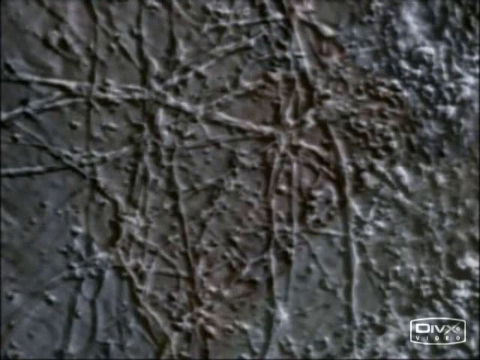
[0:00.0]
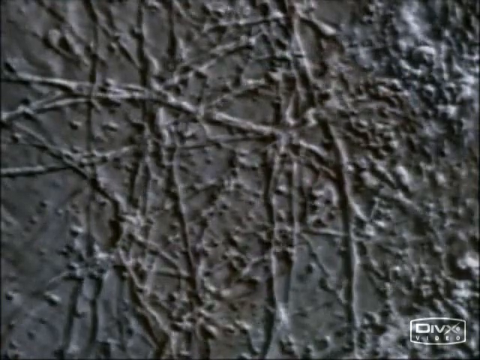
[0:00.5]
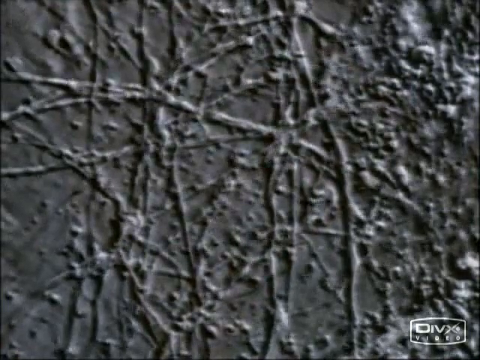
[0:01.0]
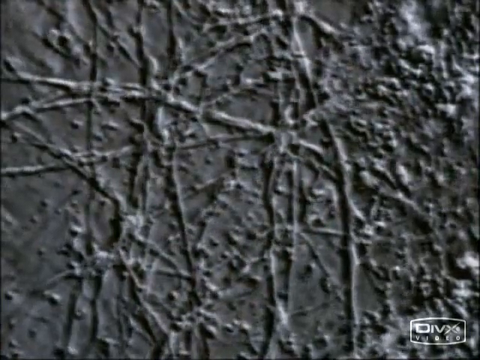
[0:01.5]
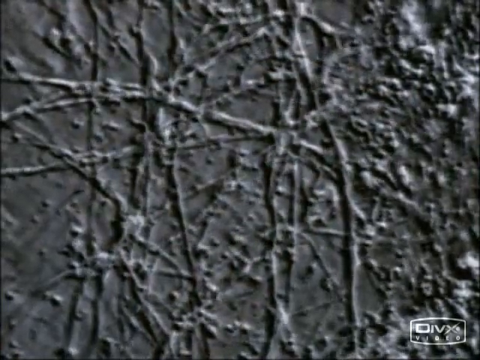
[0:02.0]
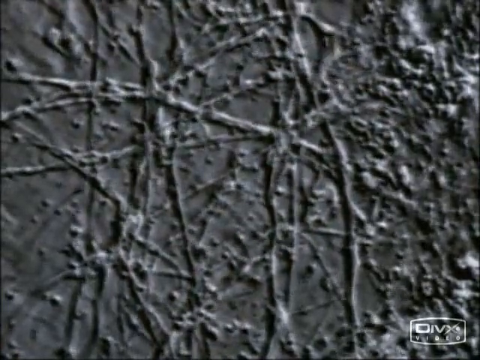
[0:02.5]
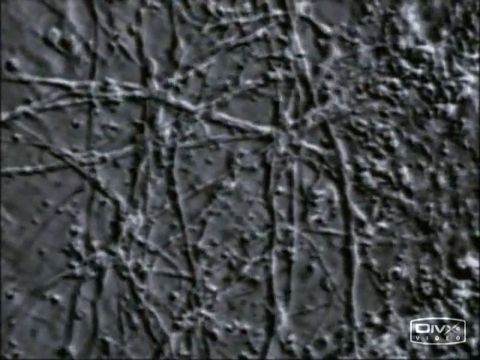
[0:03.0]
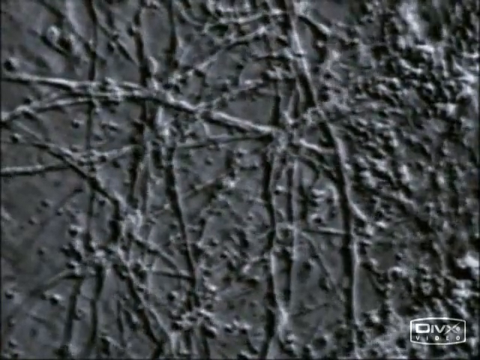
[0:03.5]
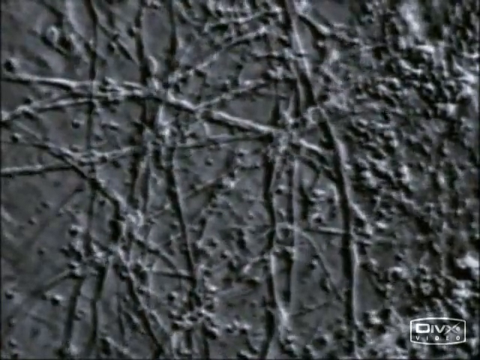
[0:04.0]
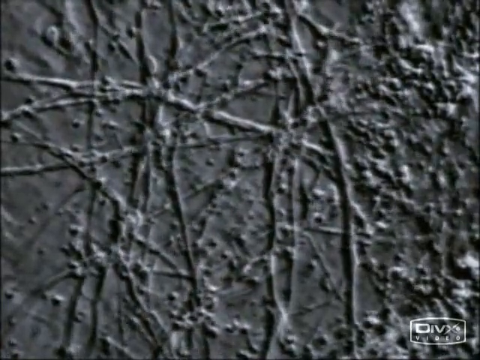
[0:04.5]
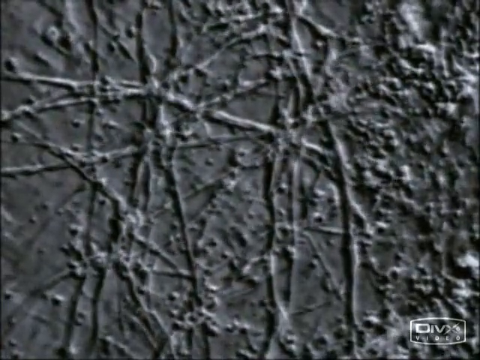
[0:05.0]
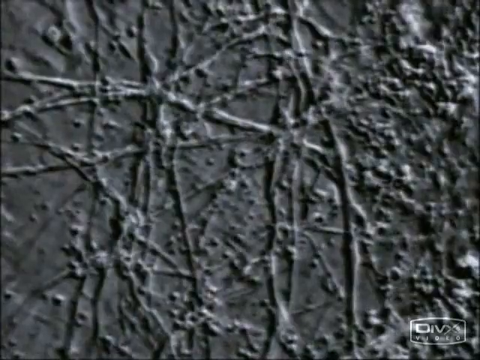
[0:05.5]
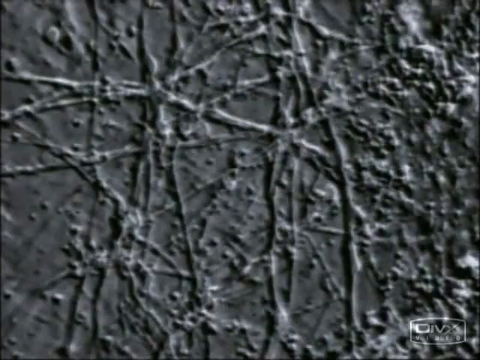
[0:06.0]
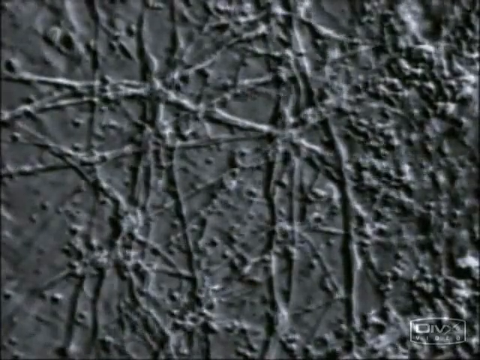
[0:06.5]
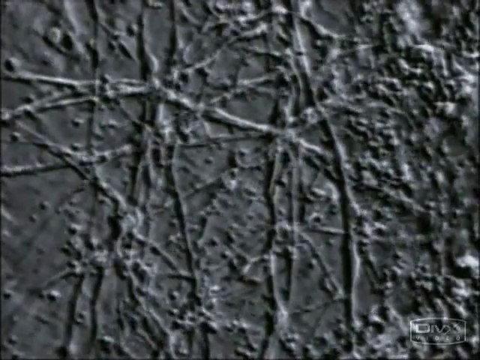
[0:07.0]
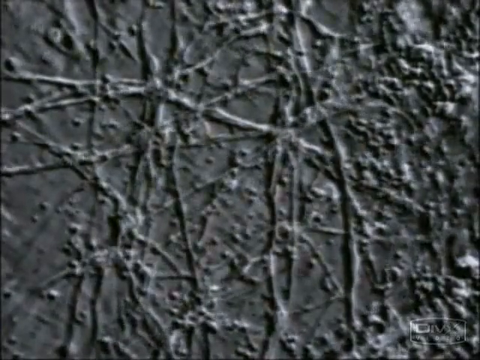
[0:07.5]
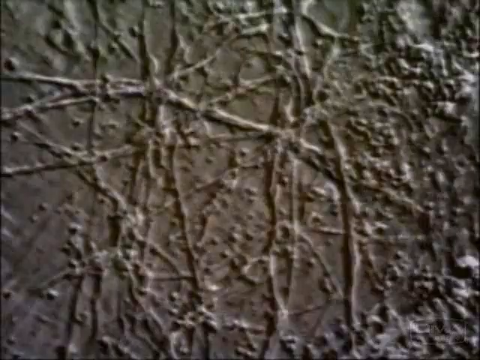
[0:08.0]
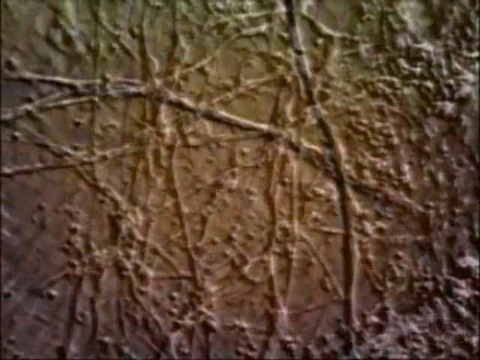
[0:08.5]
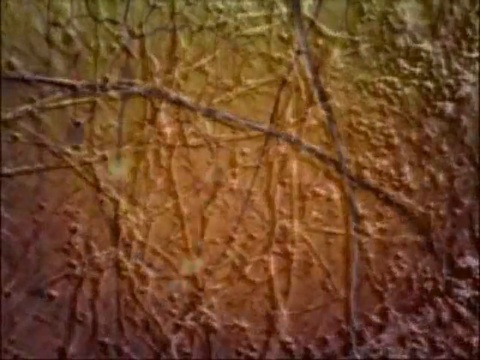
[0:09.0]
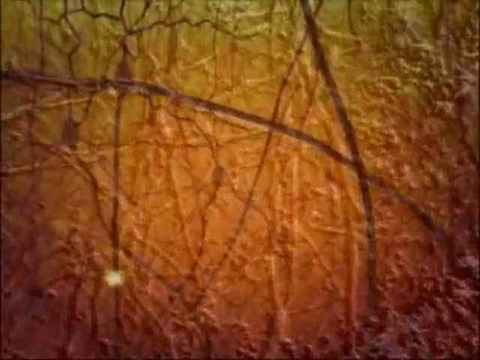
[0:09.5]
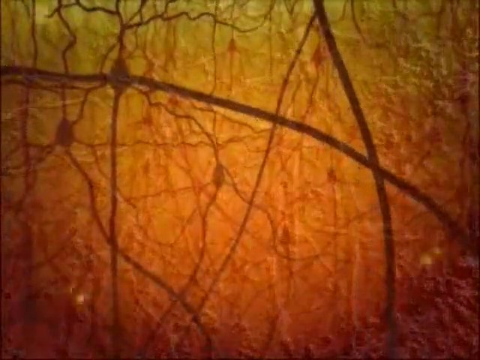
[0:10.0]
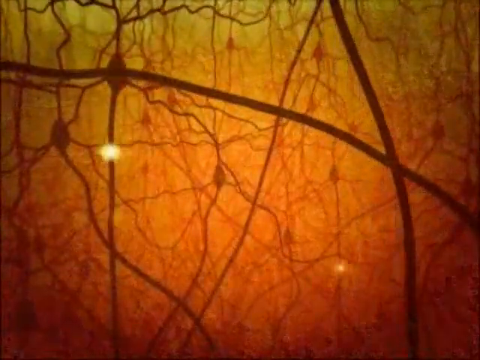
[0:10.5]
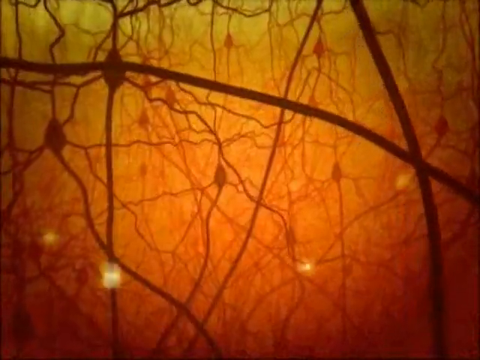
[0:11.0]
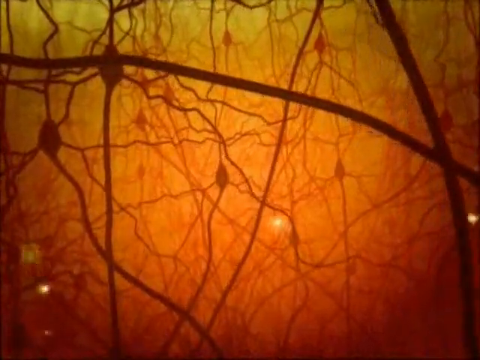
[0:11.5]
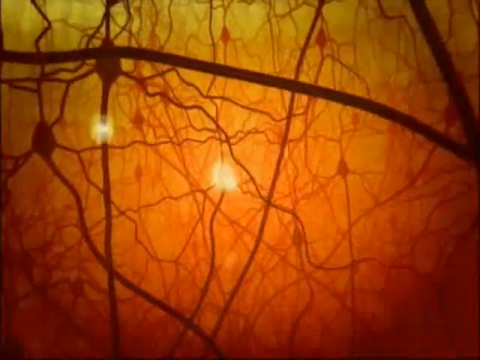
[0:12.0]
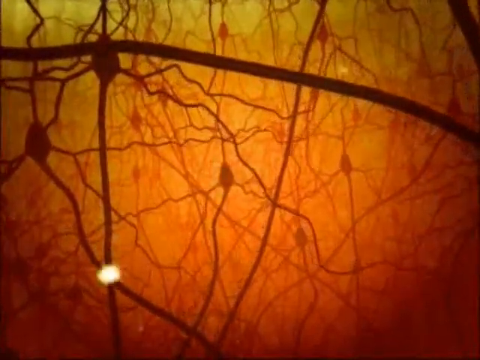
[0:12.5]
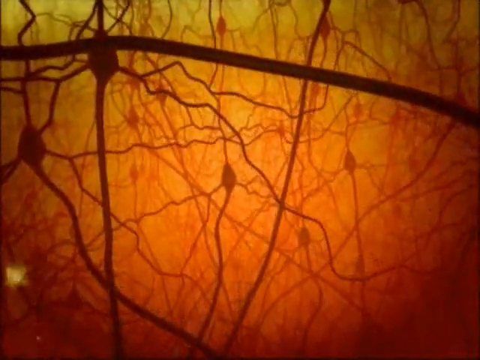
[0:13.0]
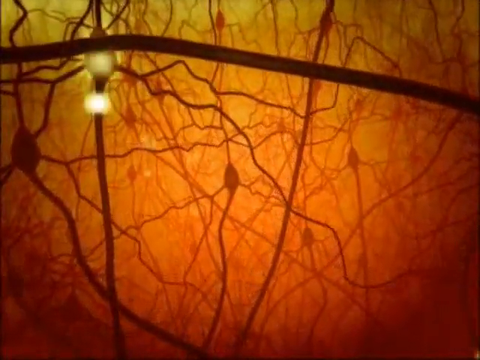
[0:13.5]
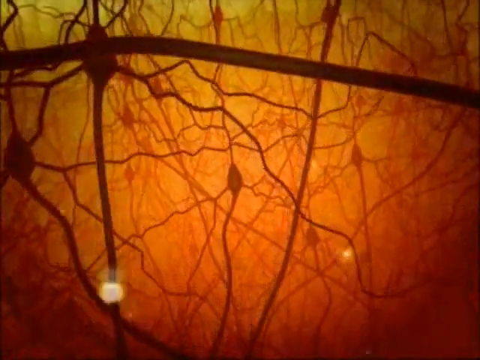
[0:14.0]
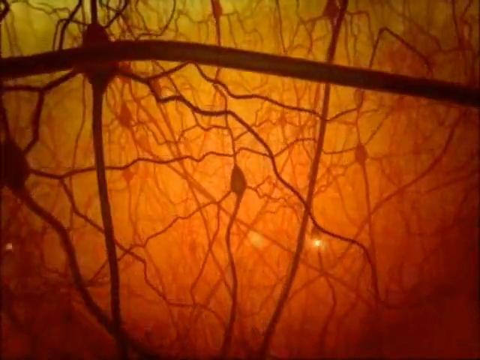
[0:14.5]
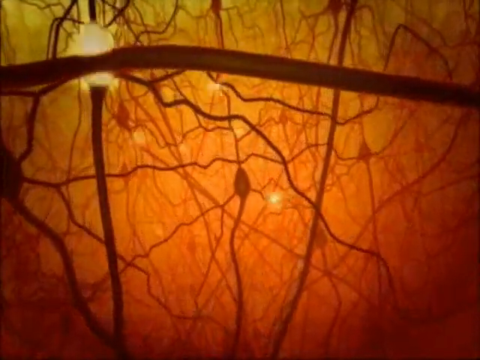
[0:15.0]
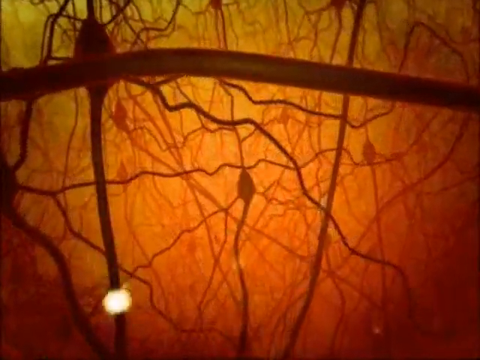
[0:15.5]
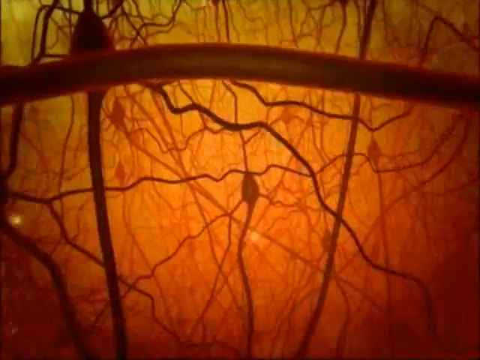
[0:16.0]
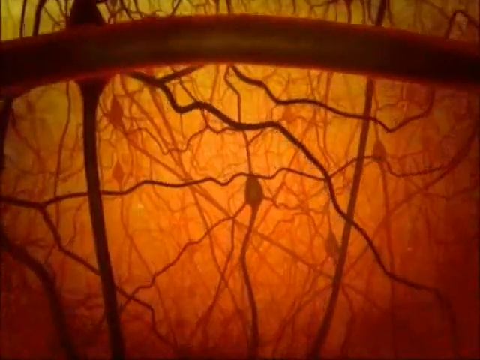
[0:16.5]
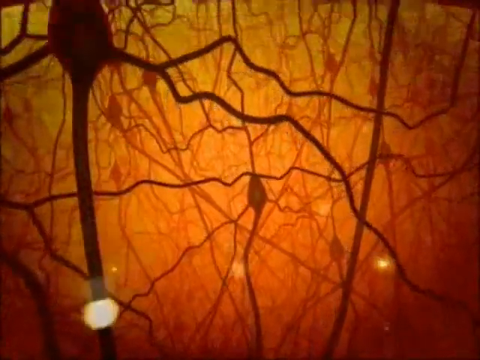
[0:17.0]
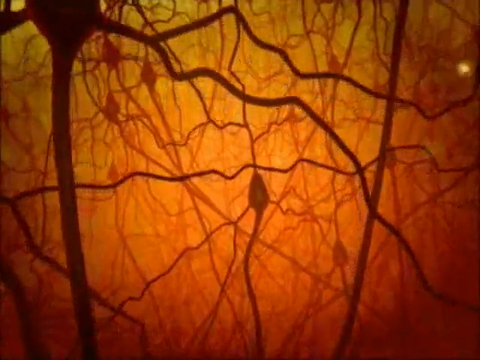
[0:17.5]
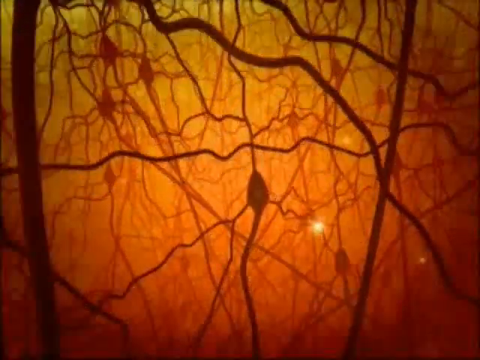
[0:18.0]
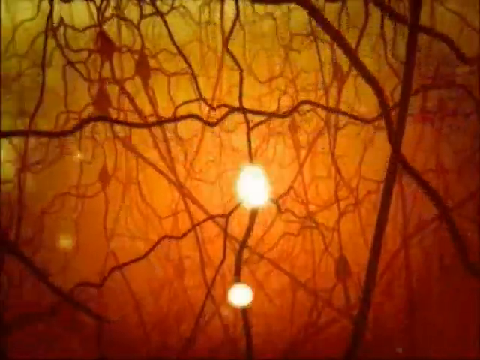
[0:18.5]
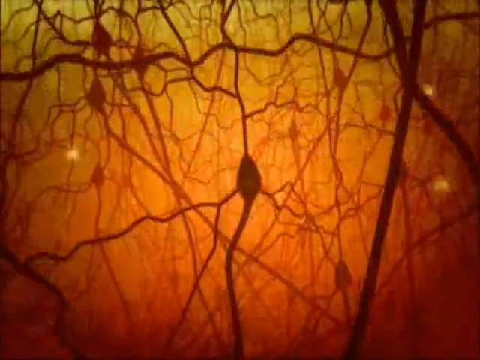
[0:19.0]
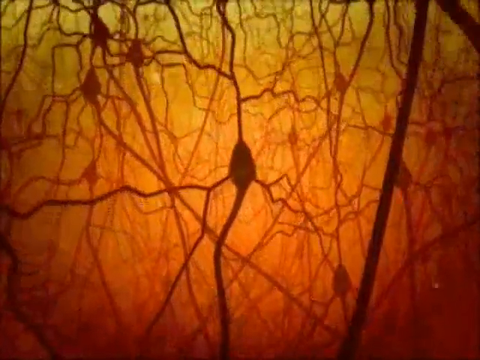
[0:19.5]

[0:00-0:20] The video opens on what looks like a photograph taken through a telescope of the surface of a planet, possibly Mars or the moon, showing what looks like a rocky surface covered in strands. A logo in the bottom right corner reads "DivX Video." The shape begins to move, with its texture bits shifting, so it may instead be the surface of some kind of organism, as little bumps and dots move. Color comes into the image and it becomes orange. The view now looks like a bunch of blood vessels or perhaps neurons: a network of strands with occasional bulb shapes on them, almost like looking inside an eyeball at the optometrist. An animation shows little yellow orbs of light traveling along the paths of these vessels. The strands look like tree branches, very crooked and going off in different directions, and the camera sort of floats through them as if through a forest of branches. The backdrop is yellowish-orange, and the strands are backlit, appearing a dark reddish-brown color.